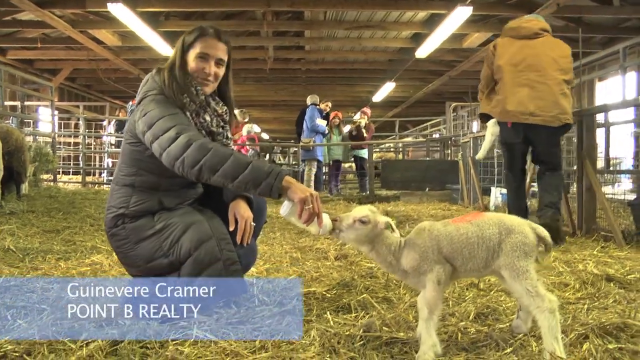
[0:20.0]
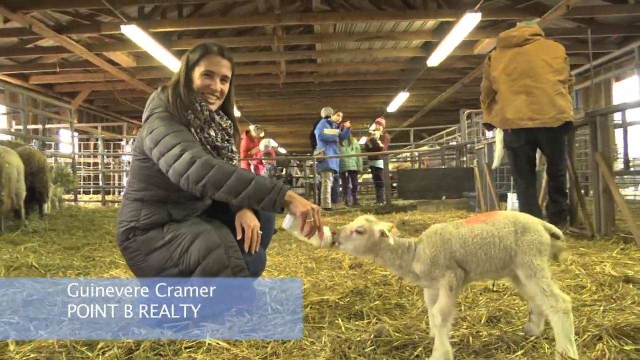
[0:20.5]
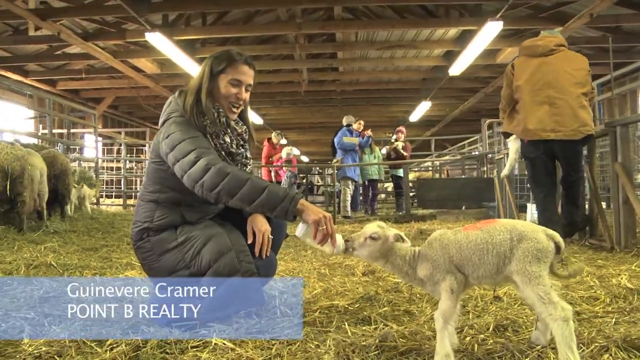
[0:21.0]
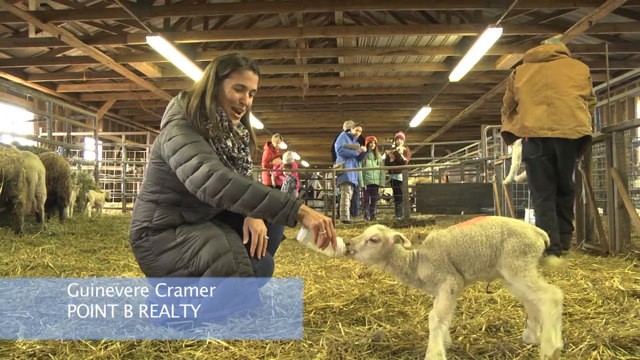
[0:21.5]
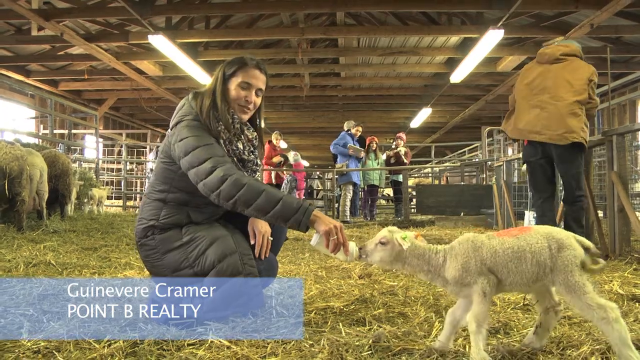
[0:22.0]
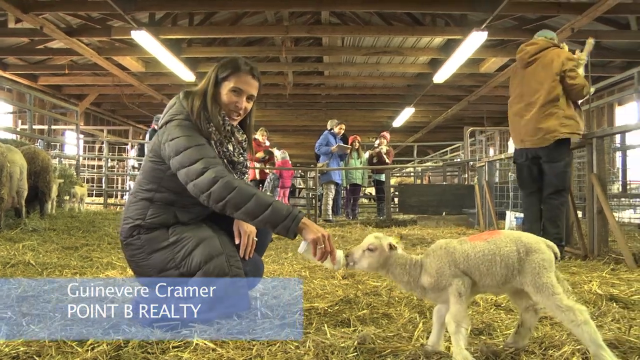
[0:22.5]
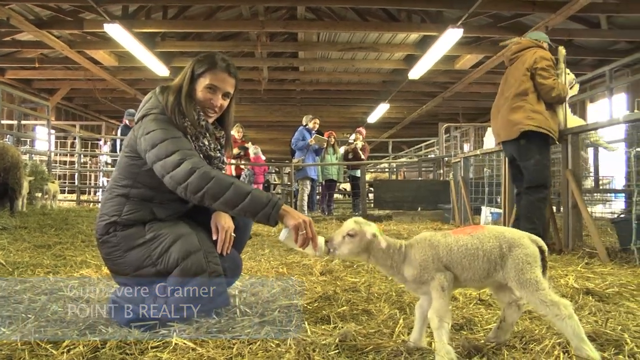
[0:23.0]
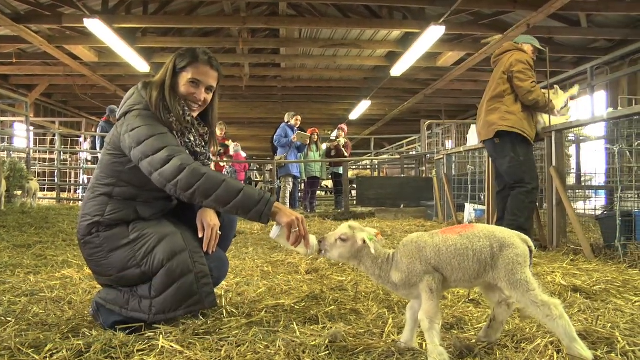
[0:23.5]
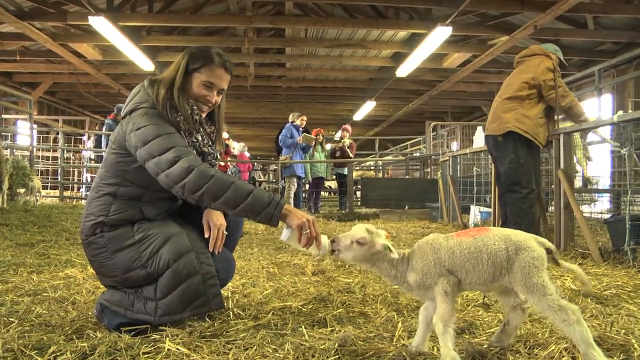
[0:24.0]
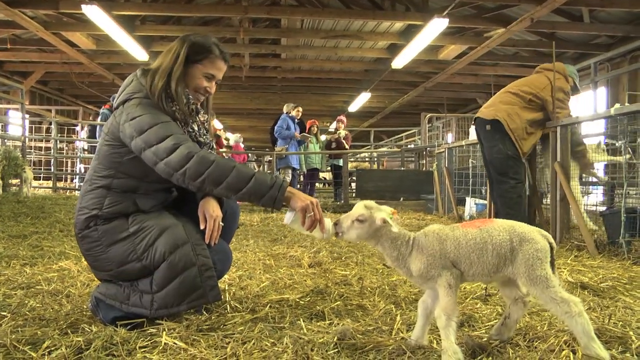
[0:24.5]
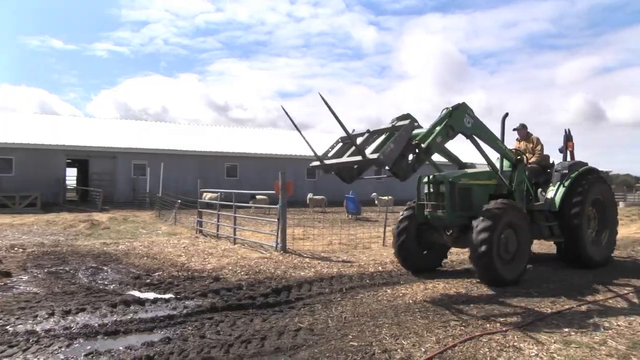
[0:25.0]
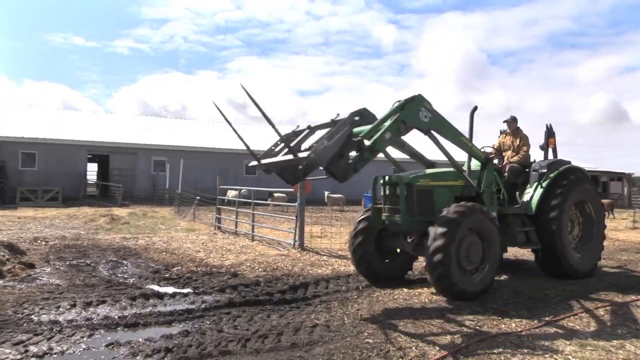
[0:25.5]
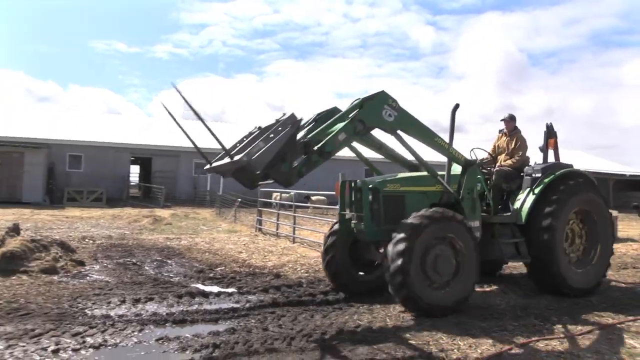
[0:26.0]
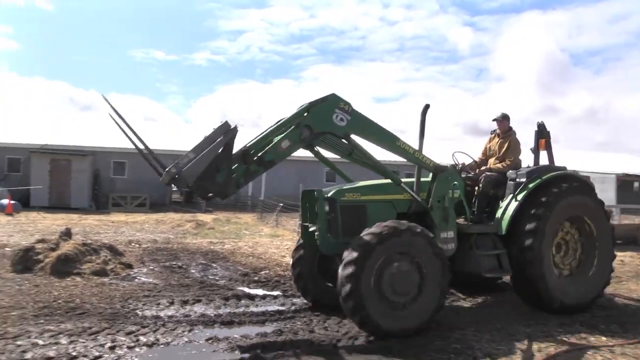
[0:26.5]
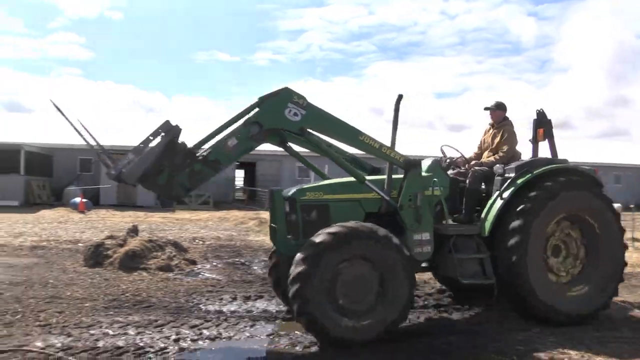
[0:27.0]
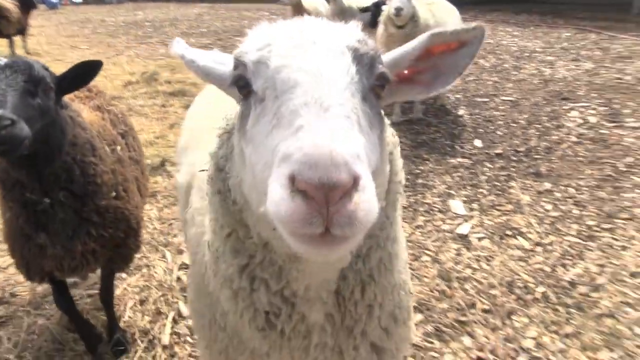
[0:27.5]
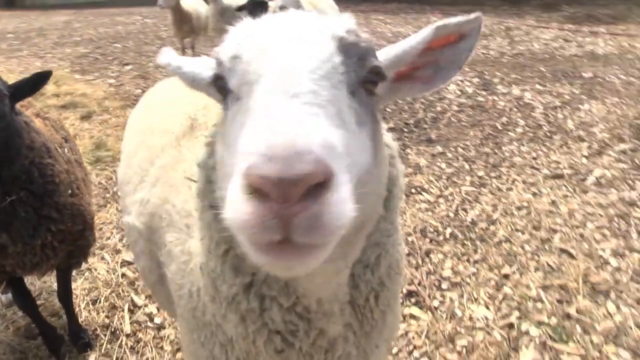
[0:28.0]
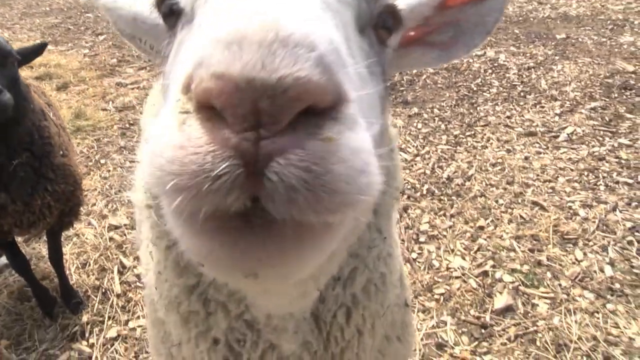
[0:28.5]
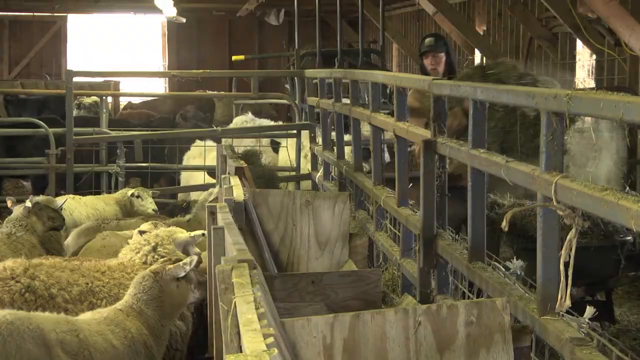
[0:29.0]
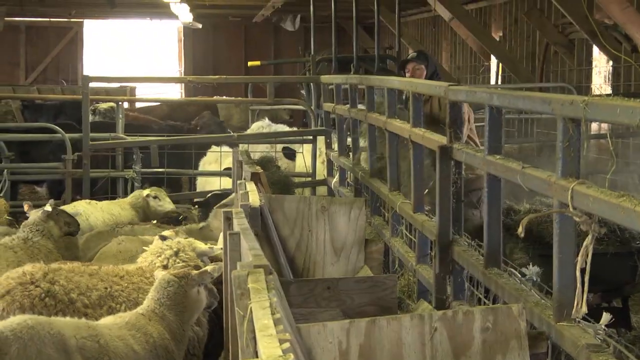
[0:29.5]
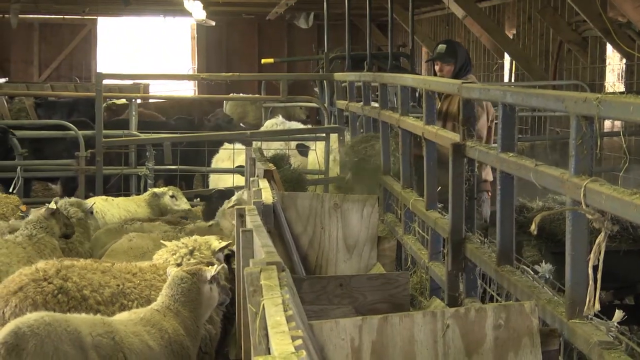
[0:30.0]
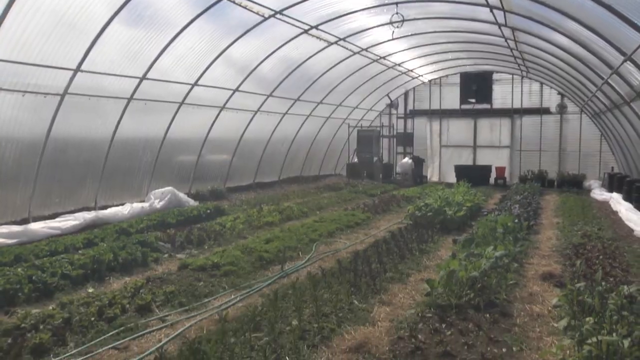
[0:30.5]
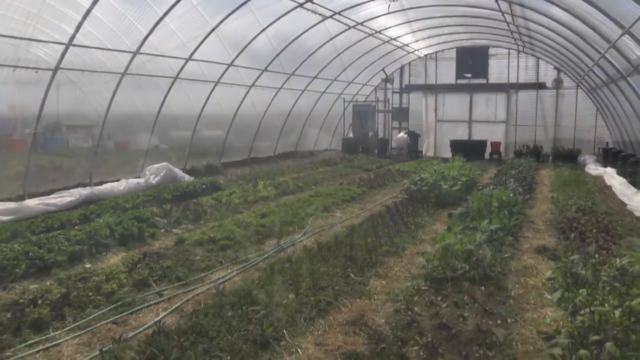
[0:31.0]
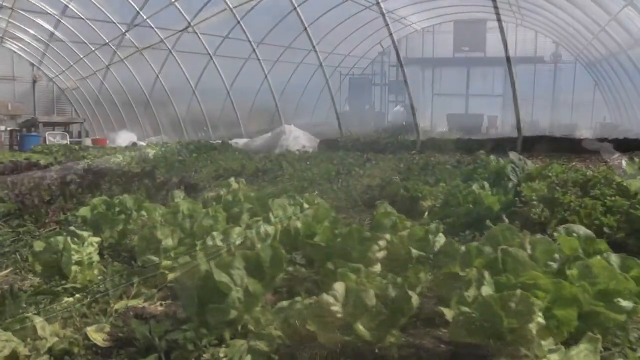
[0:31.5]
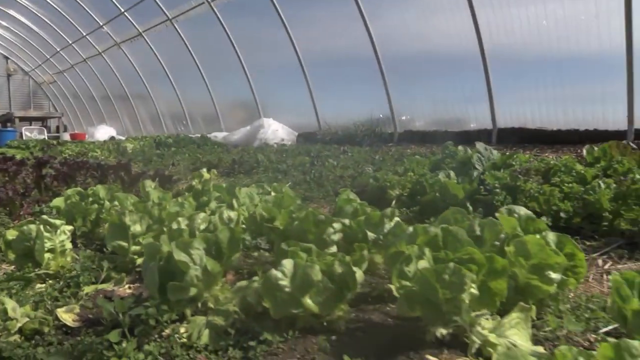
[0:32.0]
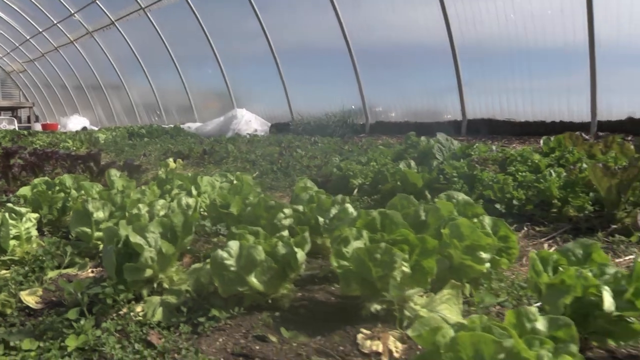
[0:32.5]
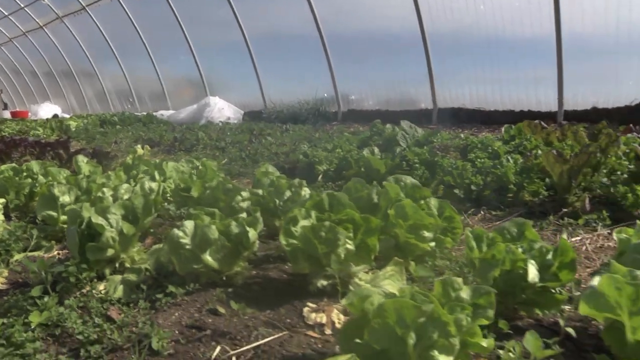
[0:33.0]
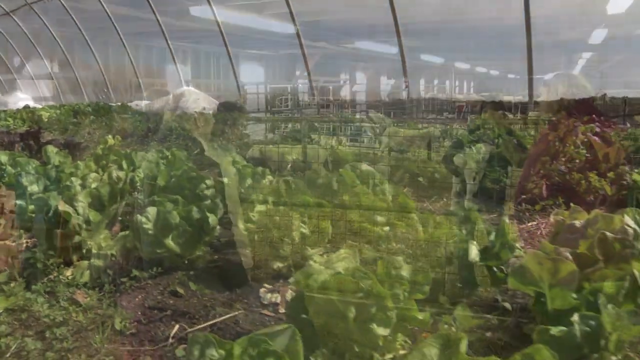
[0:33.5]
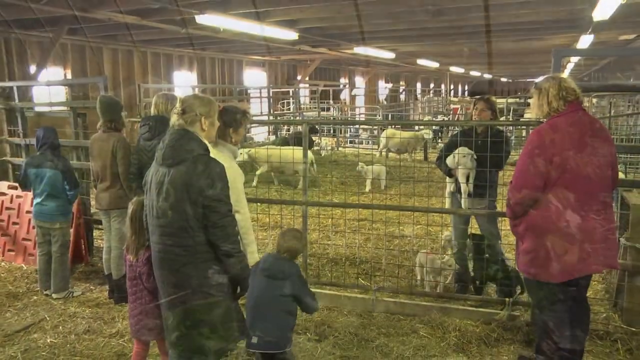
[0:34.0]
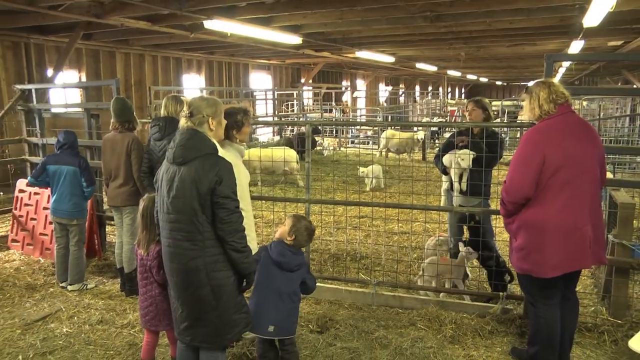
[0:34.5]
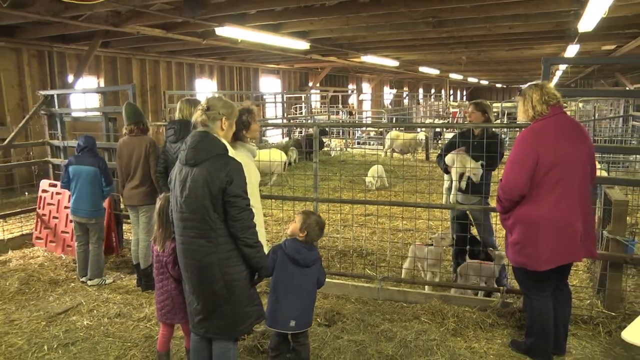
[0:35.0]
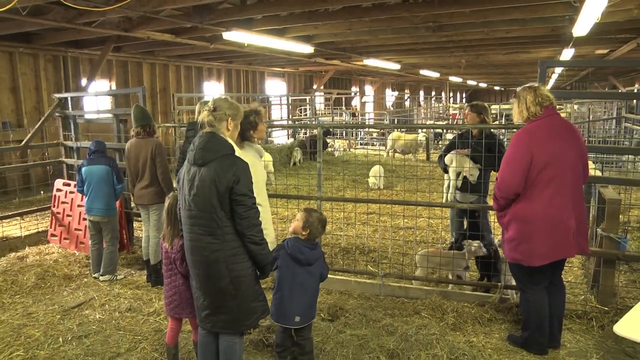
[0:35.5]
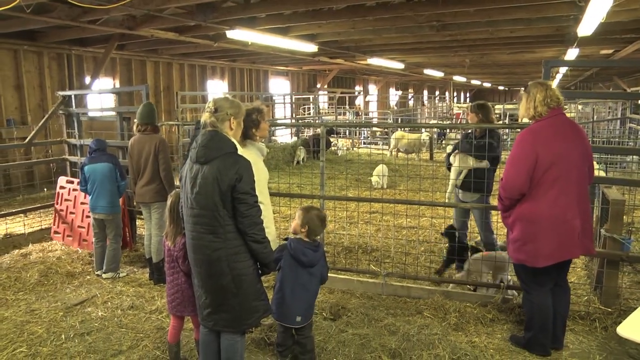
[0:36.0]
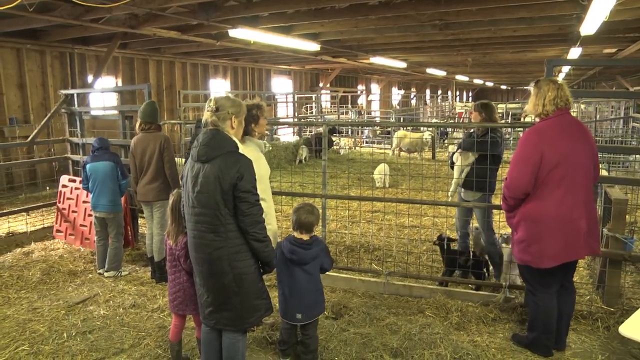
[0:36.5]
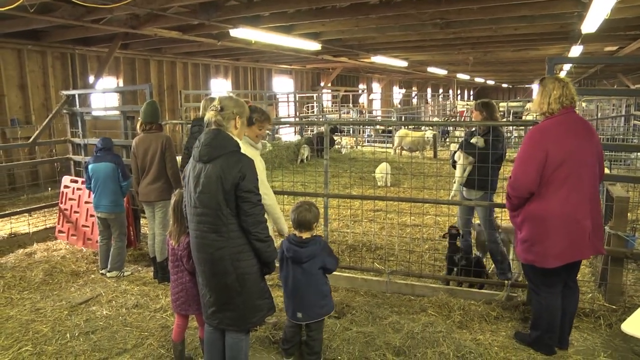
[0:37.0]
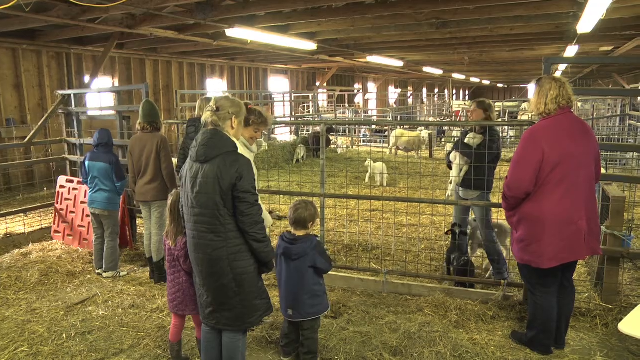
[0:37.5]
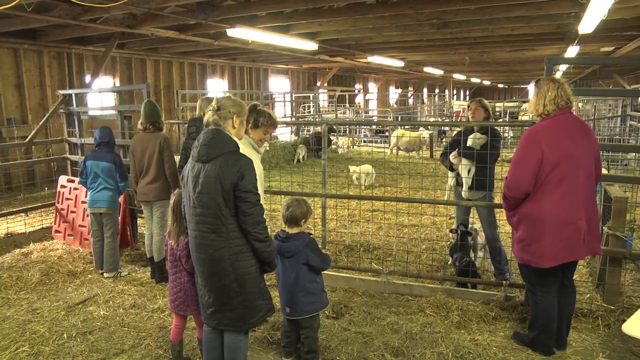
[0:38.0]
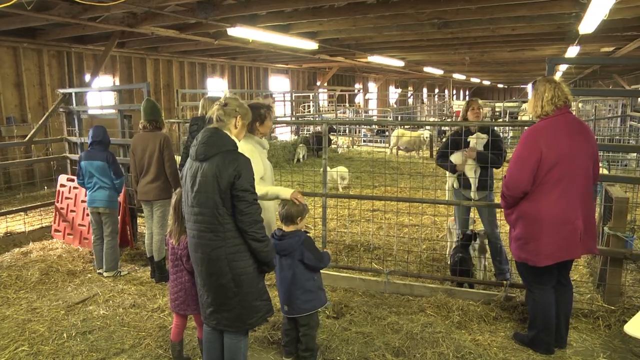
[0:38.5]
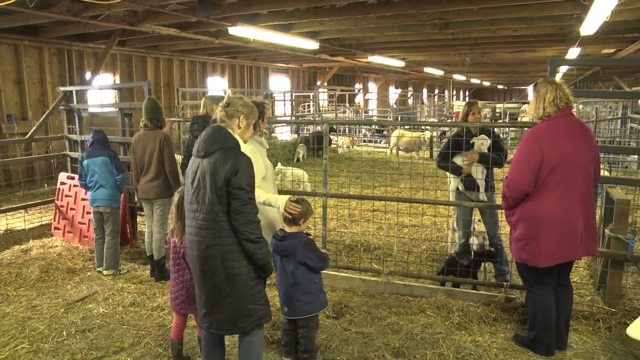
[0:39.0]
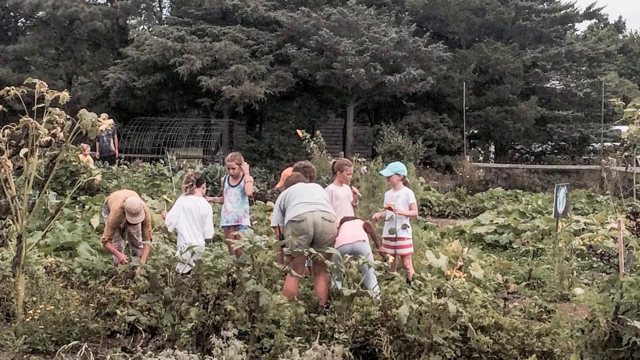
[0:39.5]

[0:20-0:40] Inside the large farm building, Guinevere Kramer from Point B Reality kneels and feeds a small lamb with a bottle of milk, smiling as she talks to the camera. She wears a grey coat and a black and white scarf. Other people in the background are talking, and other sheep are in the background on a bed of hay. The little lamb wags its tail as she feeds it. In the background on the right, a man in a brown coat lifts a lamb over a rail and into another stall. The scene changes to outside the farm building, where a tractor with a loader moves along a track in the foreground, with a pen of sheep behind it. A close-up of some sheep follows: a white one in the centre looks directly at the camera, with a brown sheep next to it on the left. The sheep sniffs at the camera and touches it with its nose. Back inside the farm building, a man puts some hay in to feed the sheep. Shots follow of a large polytunnel where crops are being grown and of lettuce in rows. The camera returns to the inside of the farm building, where some members of the public are being shown some lambs; a woman holds a lamb, stroking it and talking to the people while surrounded by young lambs. The picture then changes to an outside shot of some children and adults looking at vegetation.